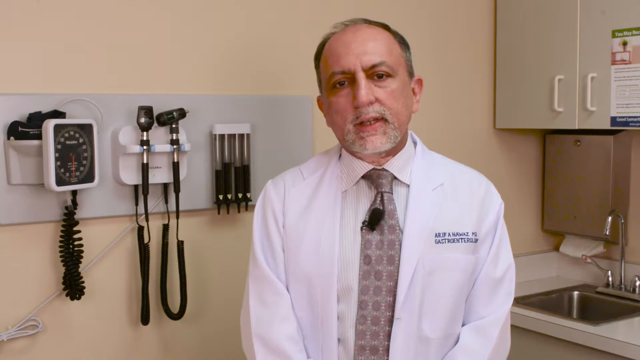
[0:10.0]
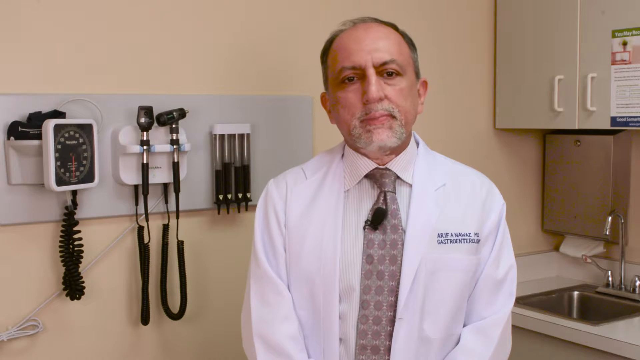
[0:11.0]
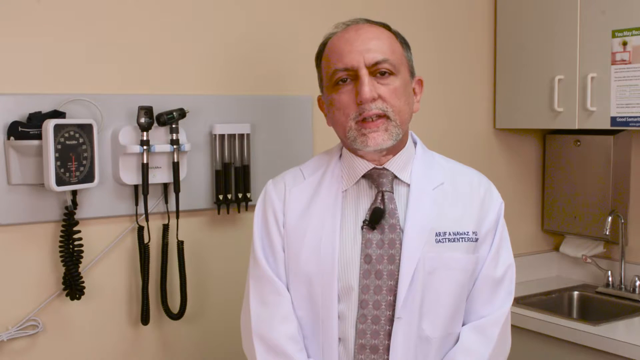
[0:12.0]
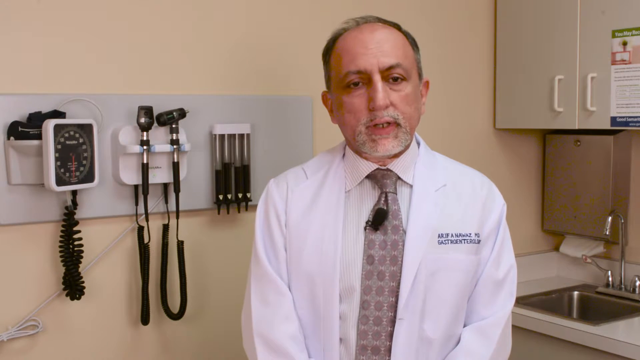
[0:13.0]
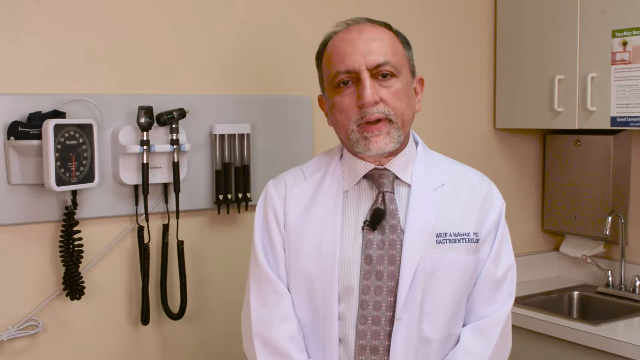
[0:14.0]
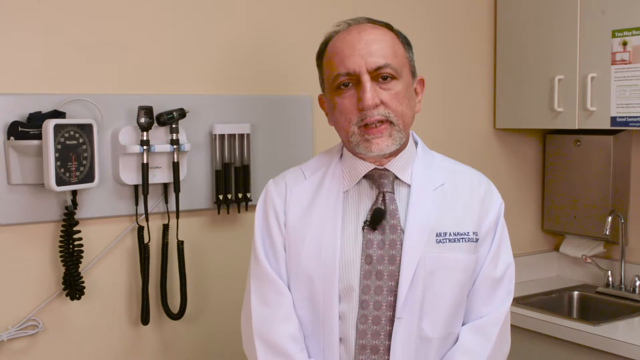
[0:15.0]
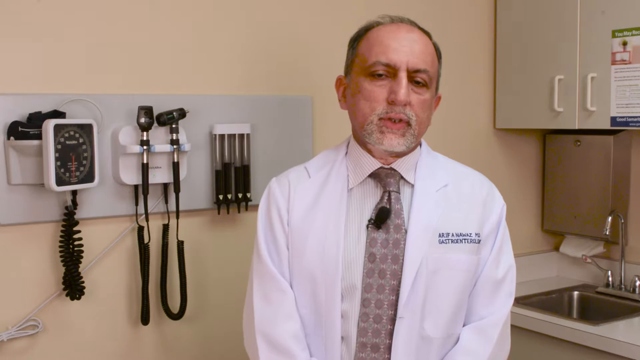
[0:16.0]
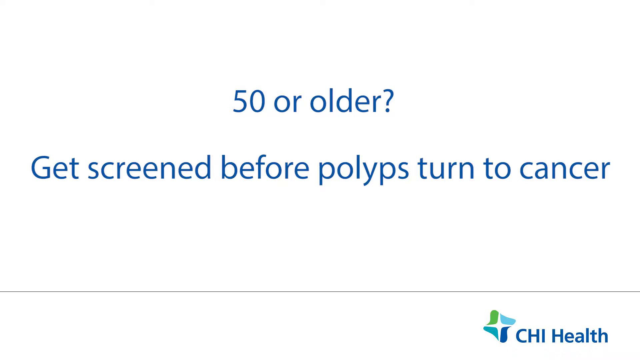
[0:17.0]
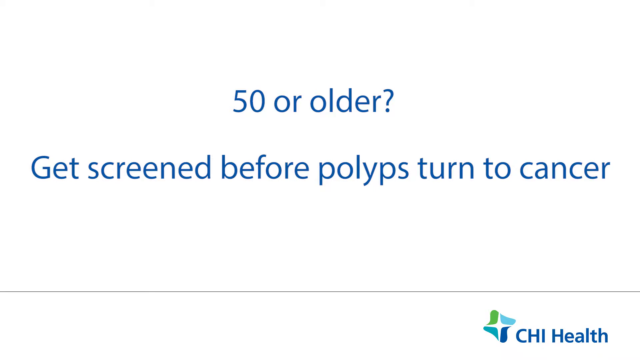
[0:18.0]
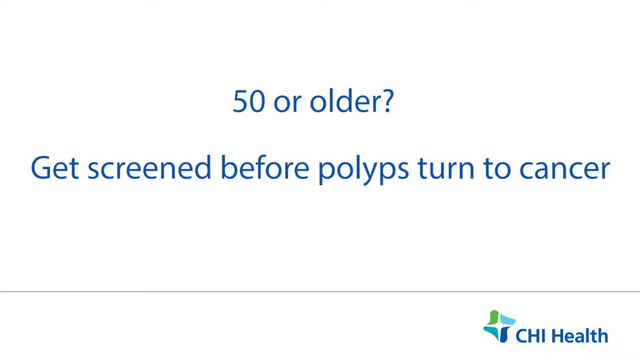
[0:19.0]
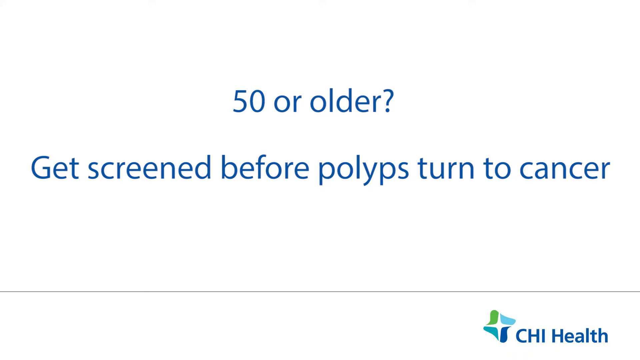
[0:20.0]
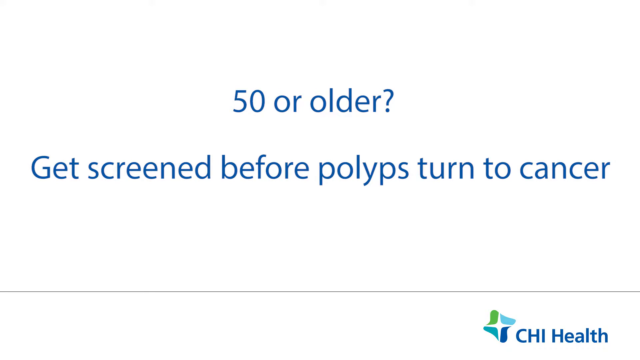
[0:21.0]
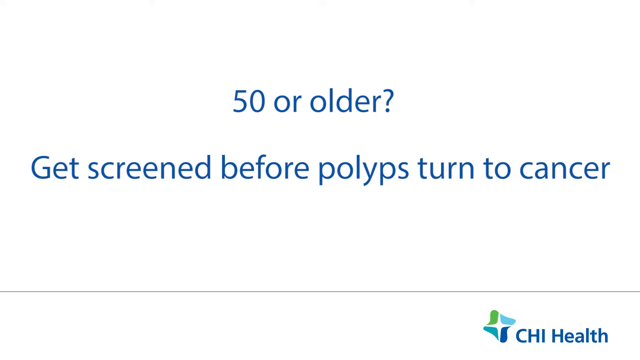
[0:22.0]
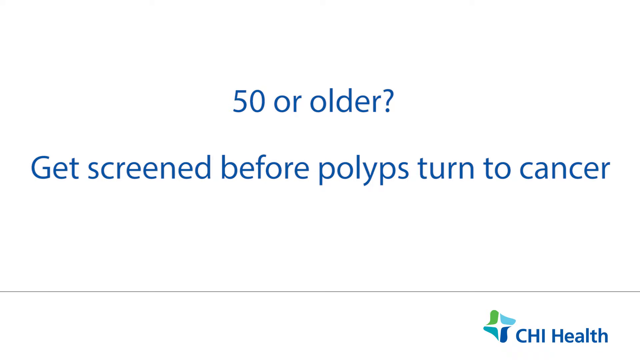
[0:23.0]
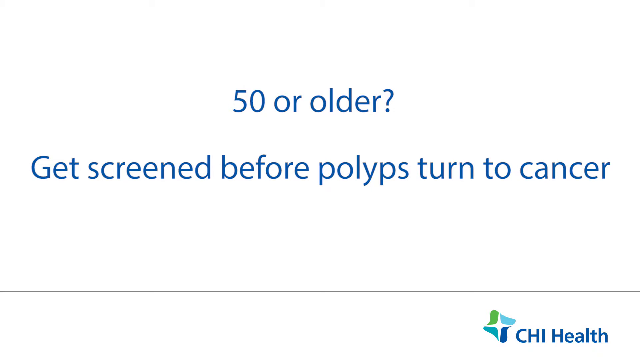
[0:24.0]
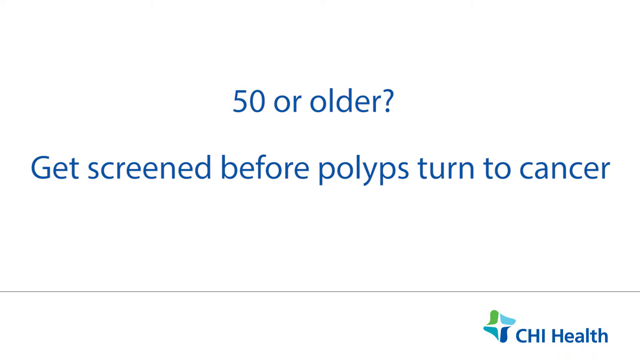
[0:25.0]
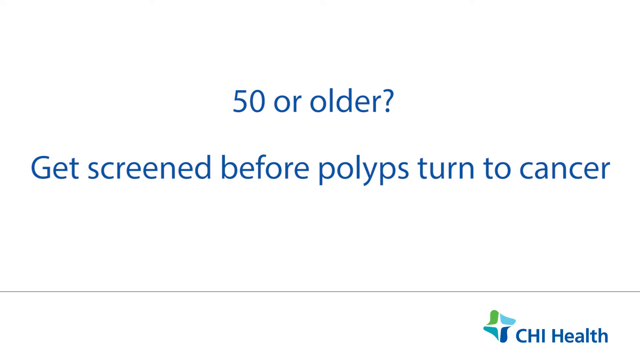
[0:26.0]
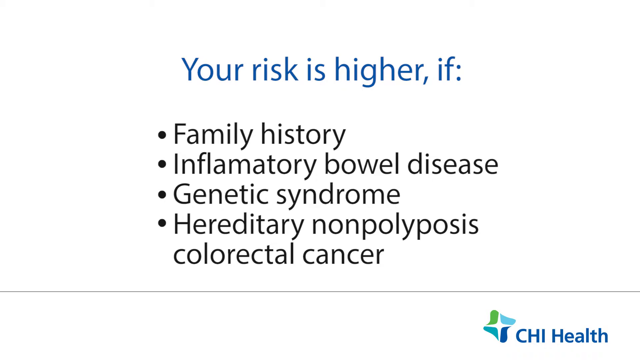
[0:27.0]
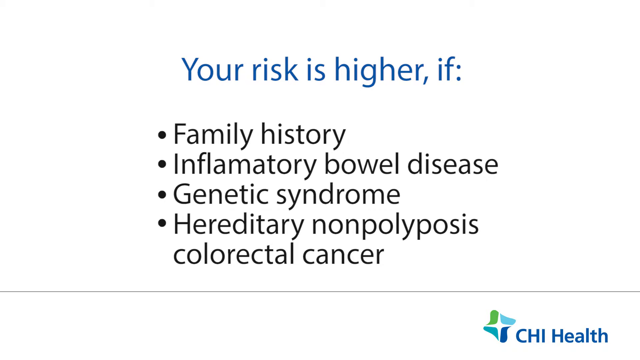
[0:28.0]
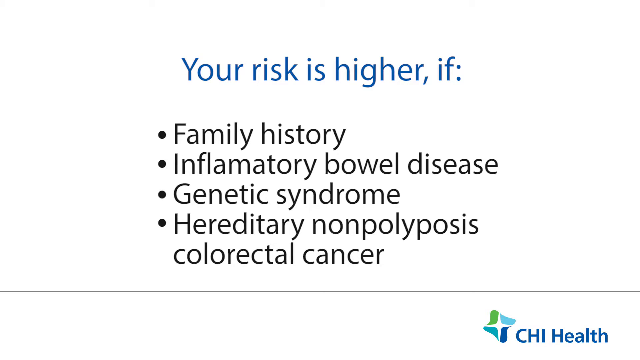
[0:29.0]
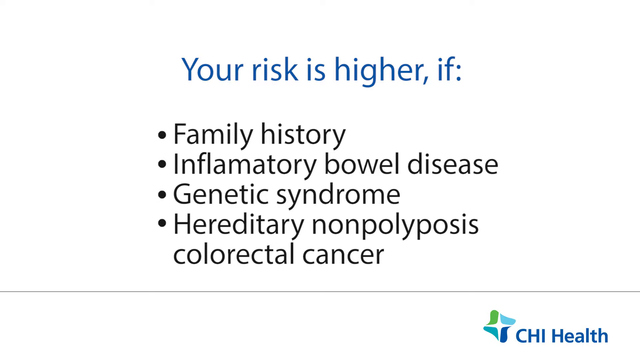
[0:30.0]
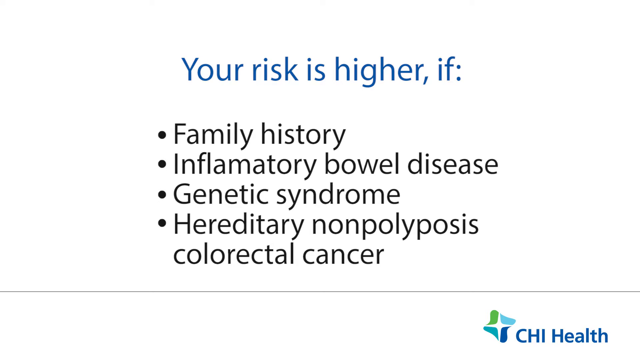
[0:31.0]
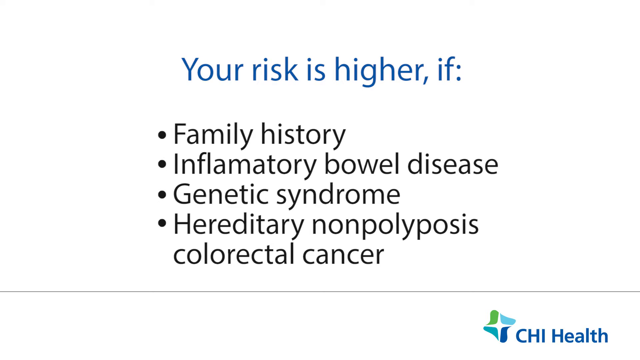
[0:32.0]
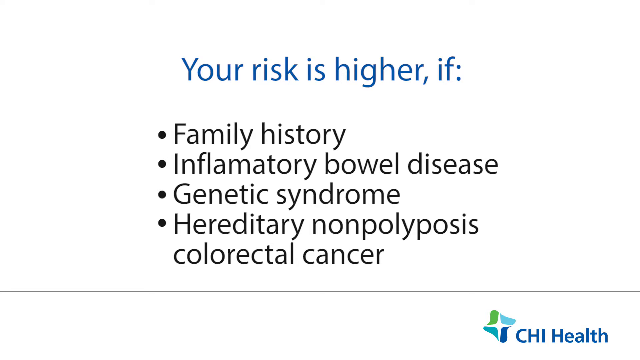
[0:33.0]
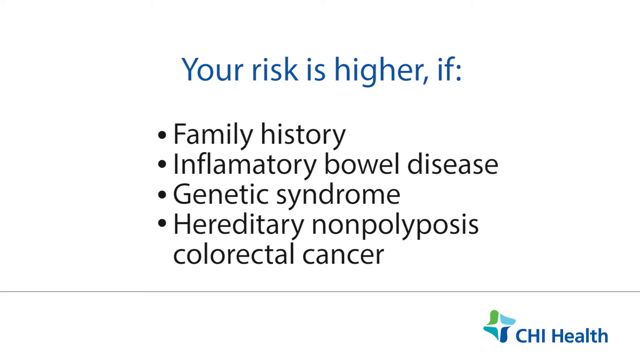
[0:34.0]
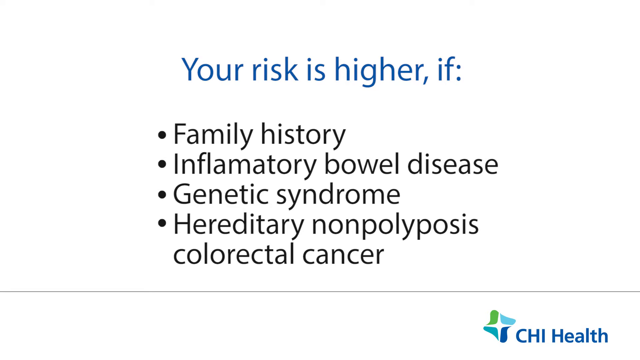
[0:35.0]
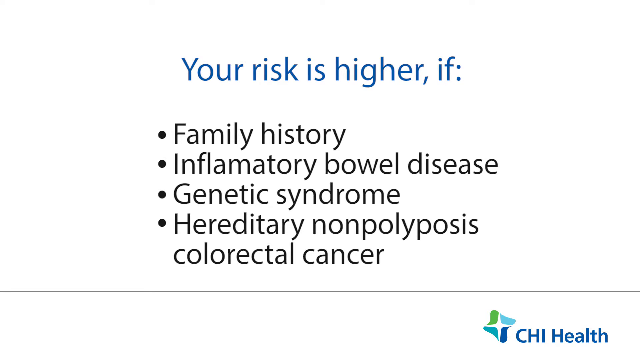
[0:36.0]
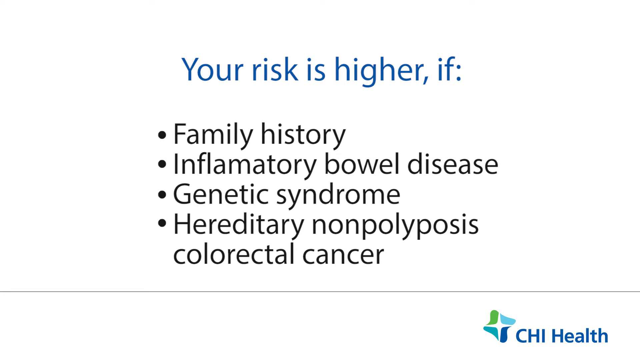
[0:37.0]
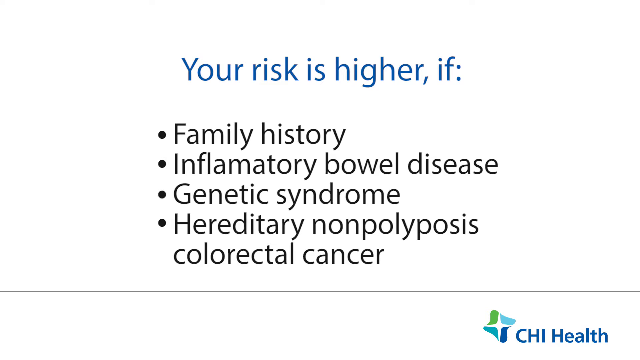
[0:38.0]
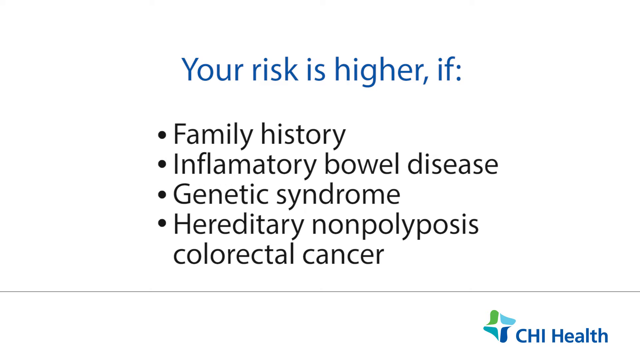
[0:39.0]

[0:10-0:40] The doctor is still talking to the camera. The scene then changes to a pure white screen with blue lettering that reads "50 or older get screened before polyps turn to cancer", with the CHI Health logo in the bottom right-hand corner. The next screen reads "your risk is higher if", followed by four bullet points reading "family history, inflammatory bowel disease, genetic syndrome, hereditary nonpolyposis, colorectal cancer". The video seems to stay on this screen for some time. The CHI Health logo again appears in the bottom right-hand corner, and a thin grey line seems to separate the logo from the information. The video comes across as serious and is probably meant to encourage people to get checked for bowel cancer.